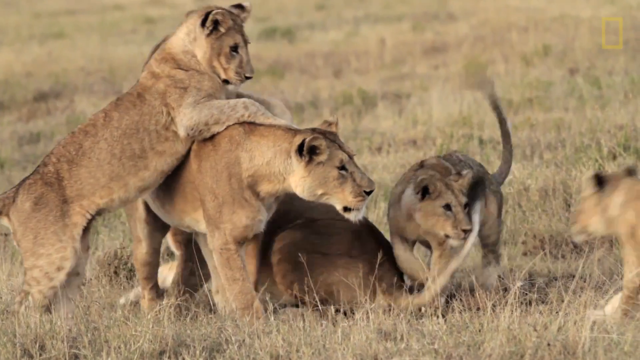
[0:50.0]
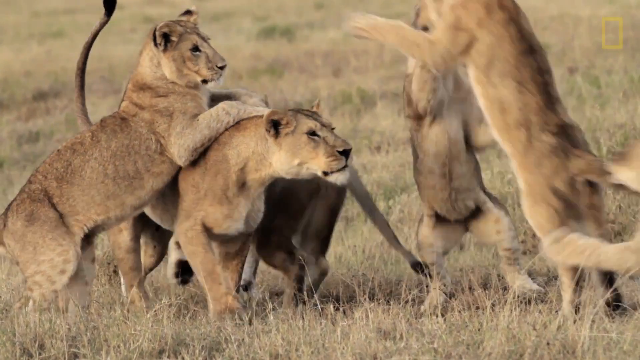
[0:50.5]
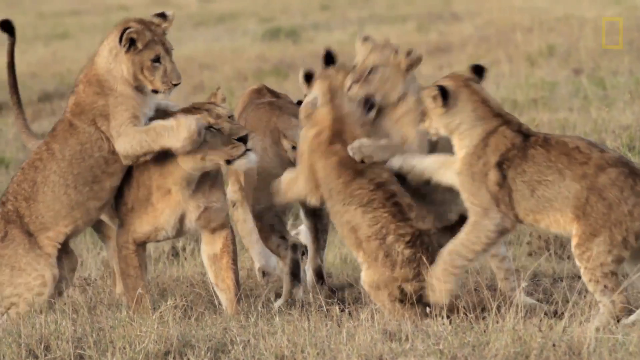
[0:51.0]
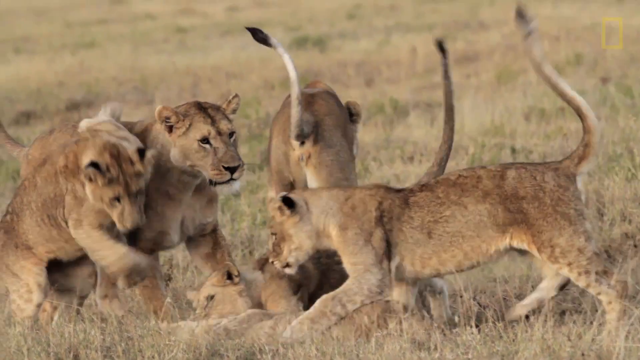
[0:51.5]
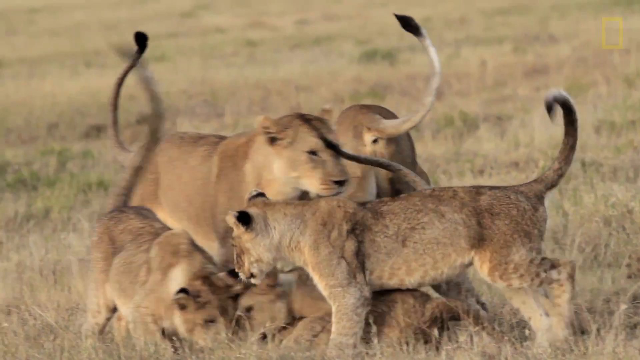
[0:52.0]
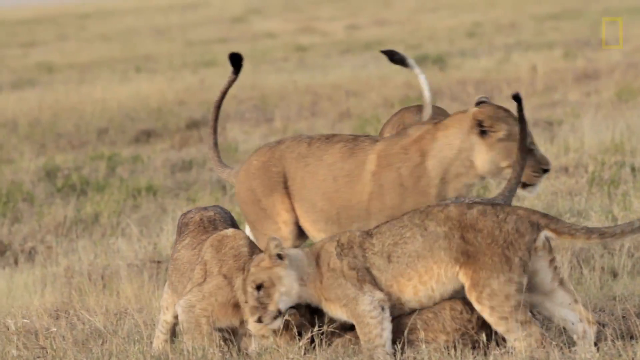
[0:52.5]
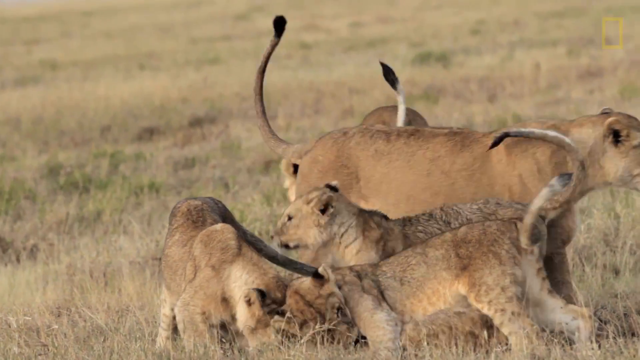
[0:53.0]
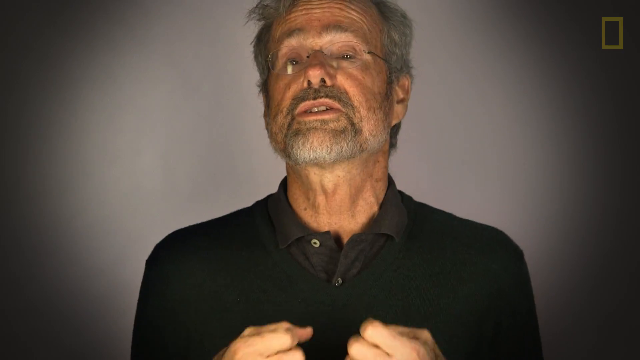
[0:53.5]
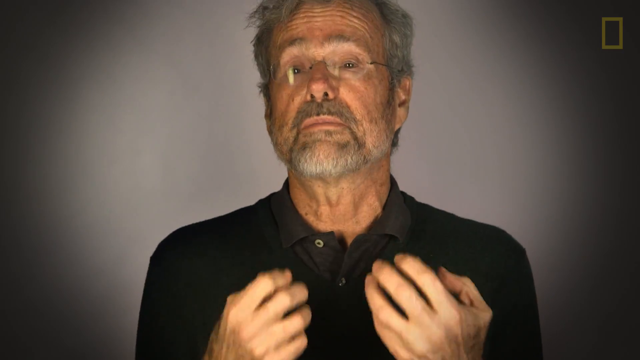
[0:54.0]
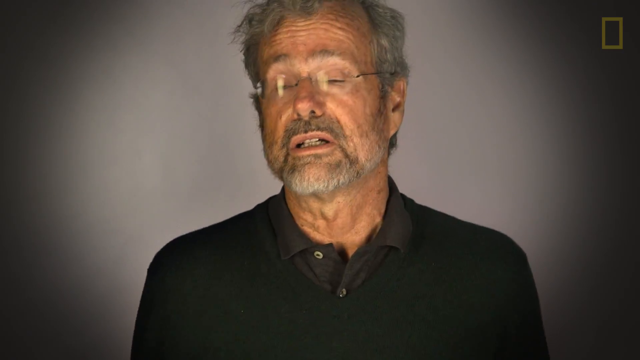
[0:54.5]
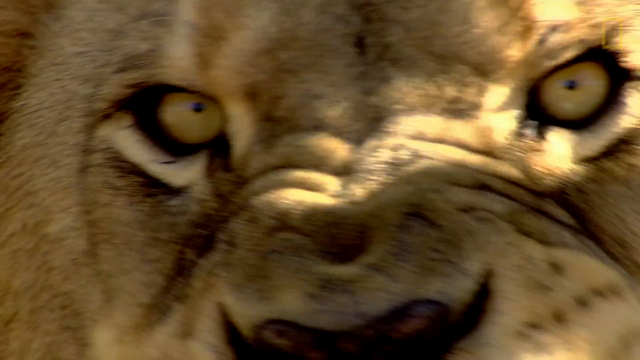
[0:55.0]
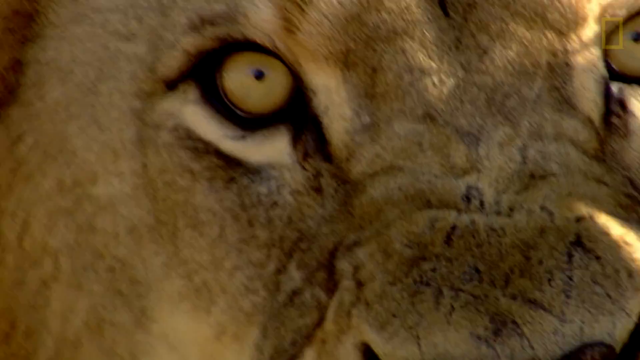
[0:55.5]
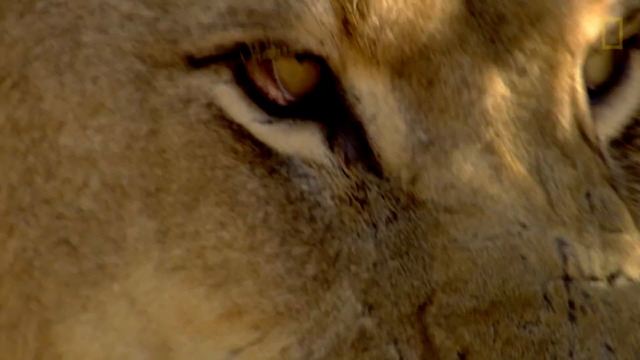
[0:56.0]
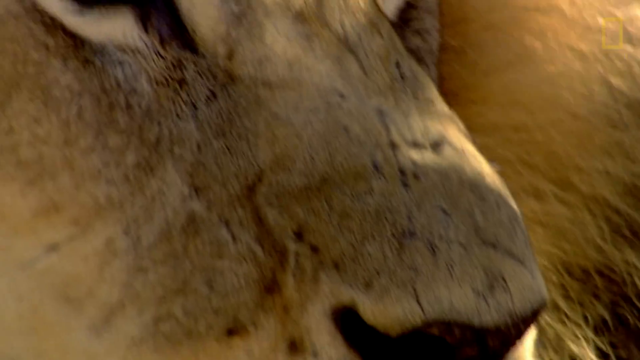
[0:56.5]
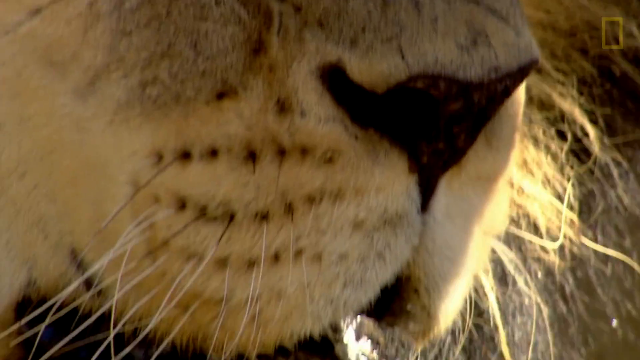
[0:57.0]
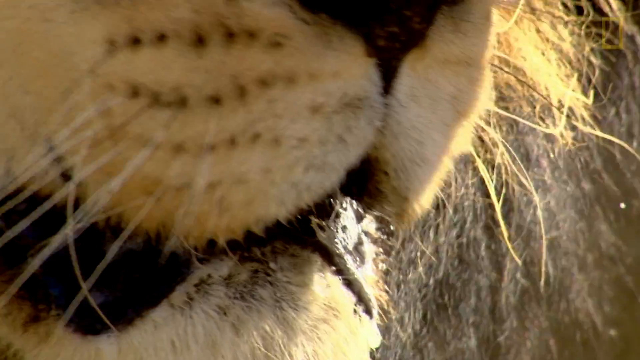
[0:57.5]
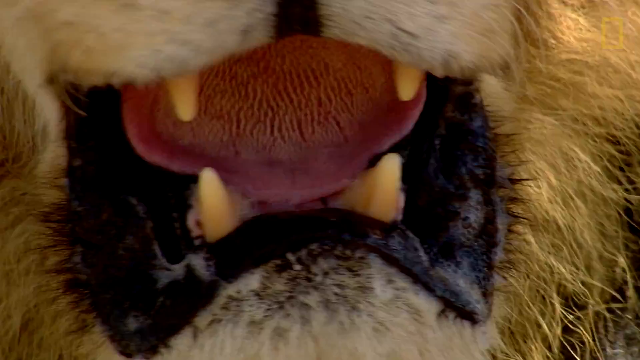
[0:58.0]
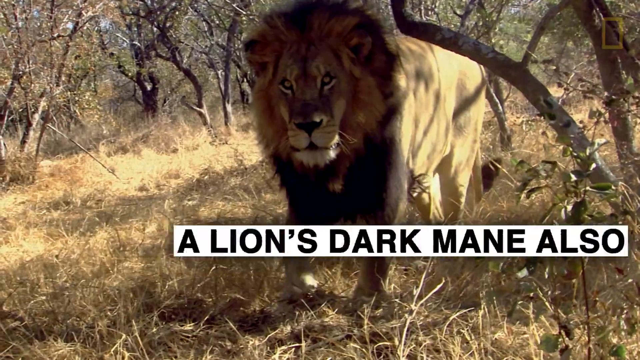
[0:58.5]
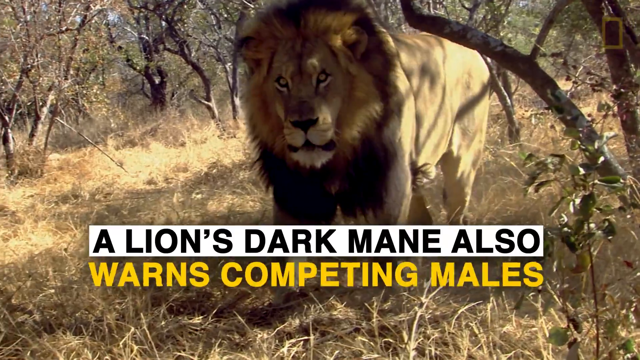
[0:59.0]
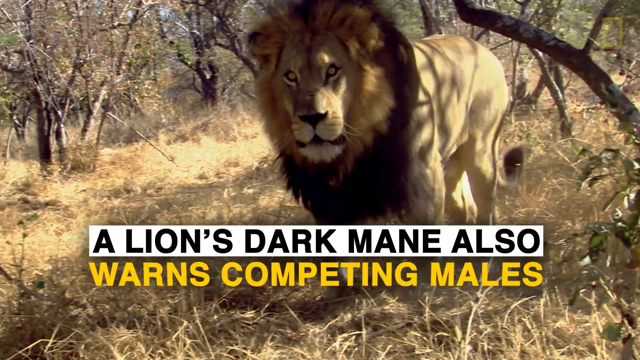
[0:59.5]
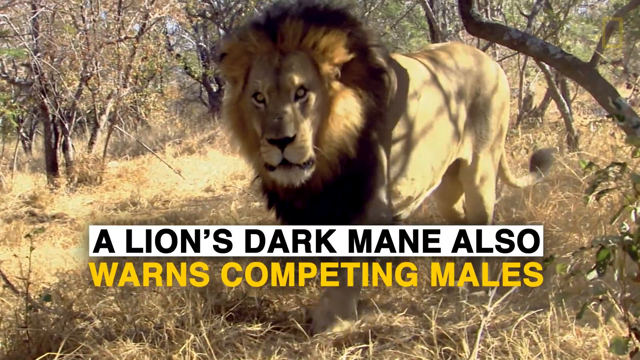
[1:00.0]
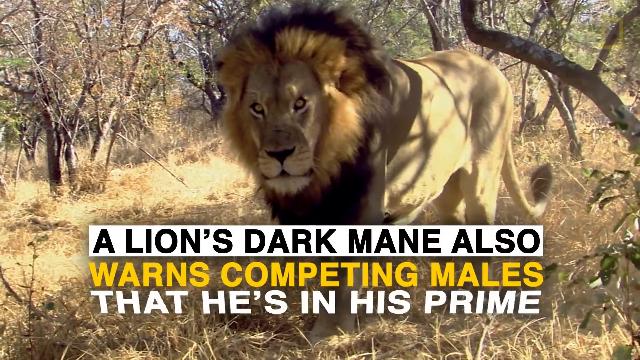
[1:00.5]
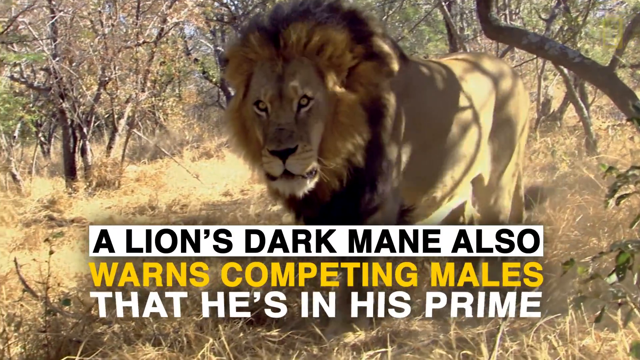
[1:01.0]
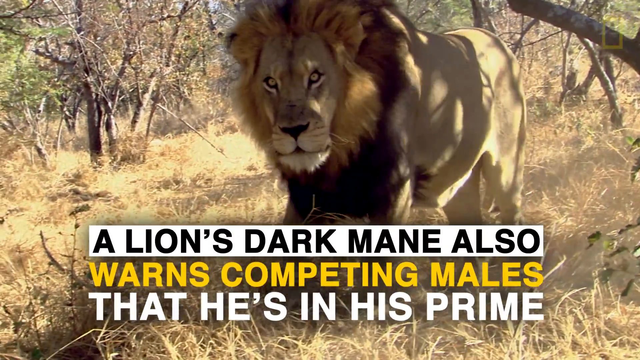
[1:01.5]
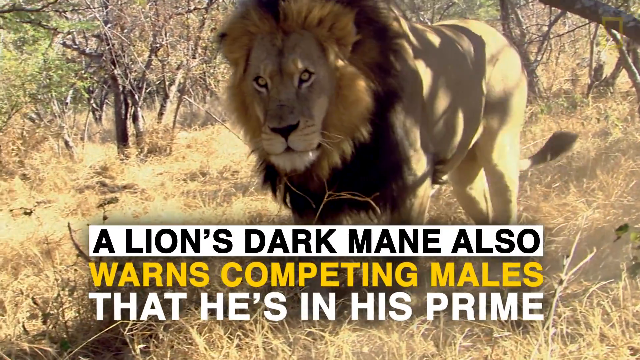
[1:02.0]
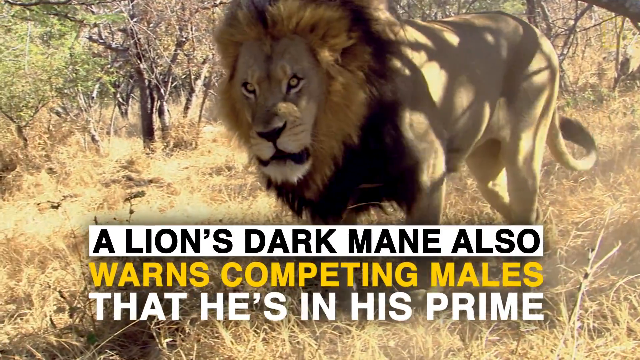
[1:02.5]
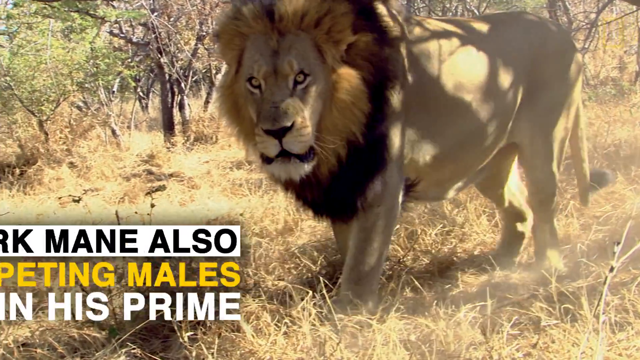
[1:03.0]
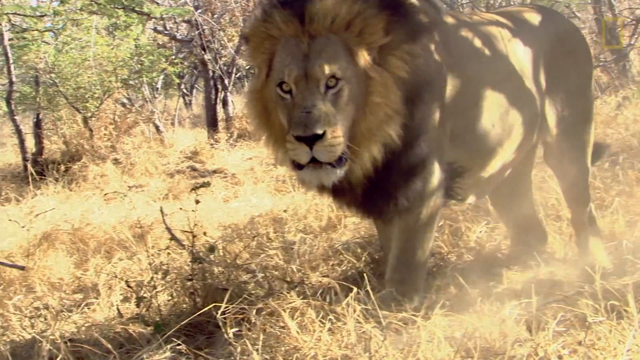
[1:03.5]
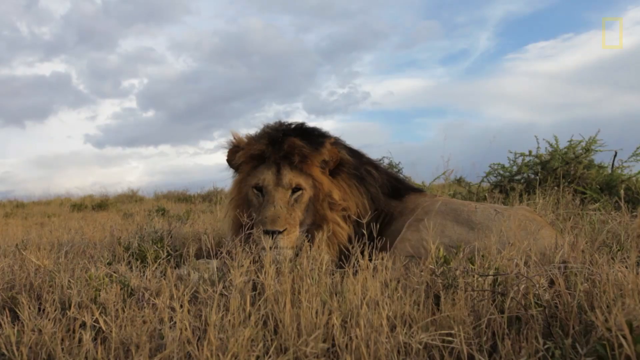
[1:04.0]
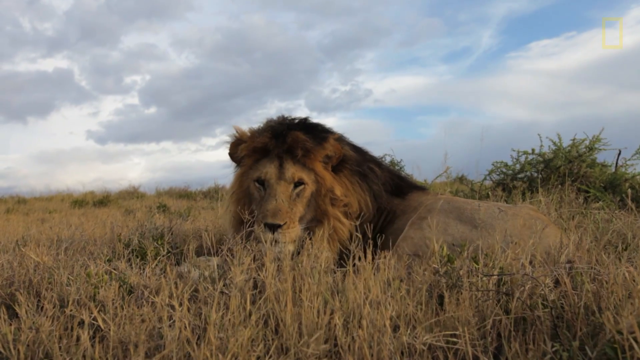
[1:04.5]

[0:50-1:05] A group of lion cubs play, jumping on each other and on their mother. The scene cuts to a very close-up view of a male lion and zooms in even more to his mouth, showing his very sharp, scary teeth. Next, a male lion walks through sparse brush while text on the screen reads "A lion's dark mane also warns competing males that he's in his prime." He shows focus on his face and care in his steps, moving very purposefully, possibly stalking something. The video then shows a male lion relaxing in the savannah grass, looking very calm.